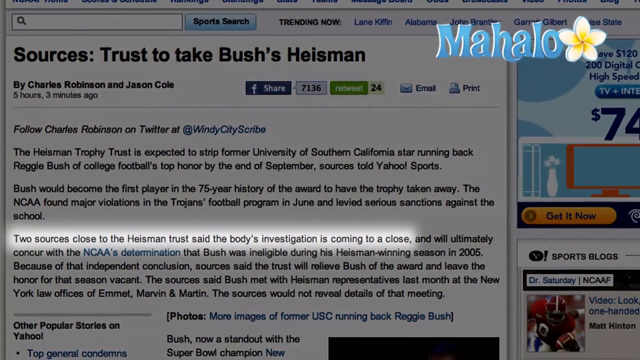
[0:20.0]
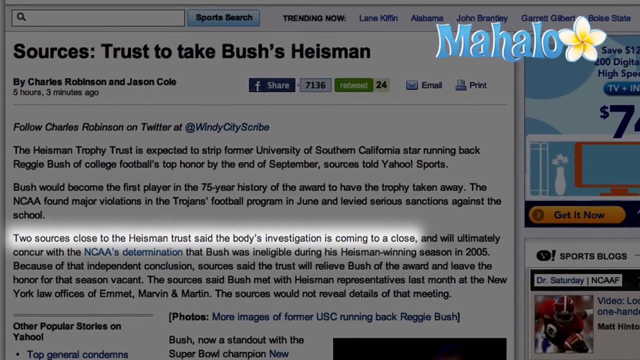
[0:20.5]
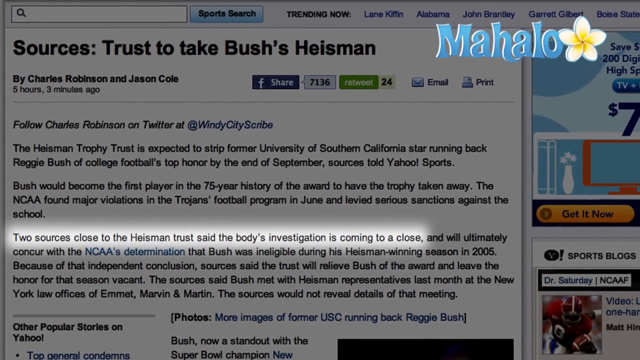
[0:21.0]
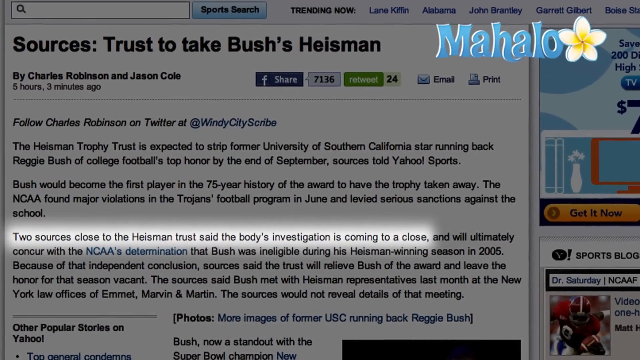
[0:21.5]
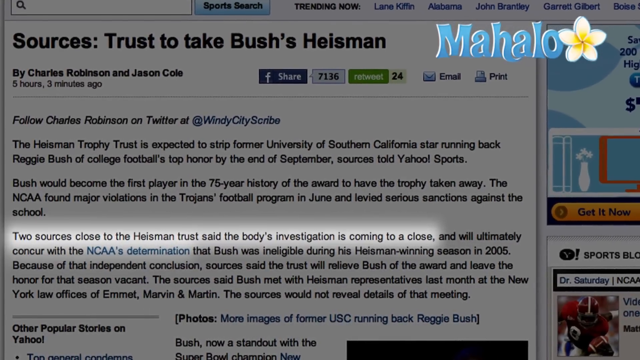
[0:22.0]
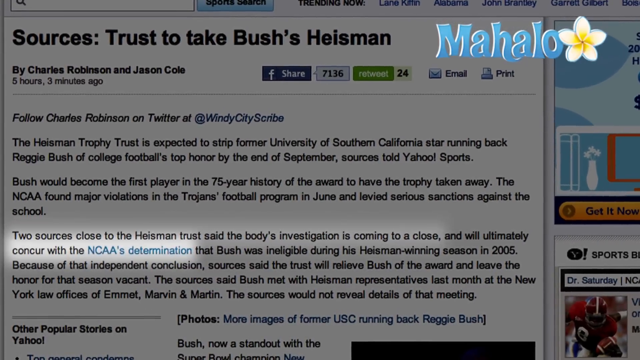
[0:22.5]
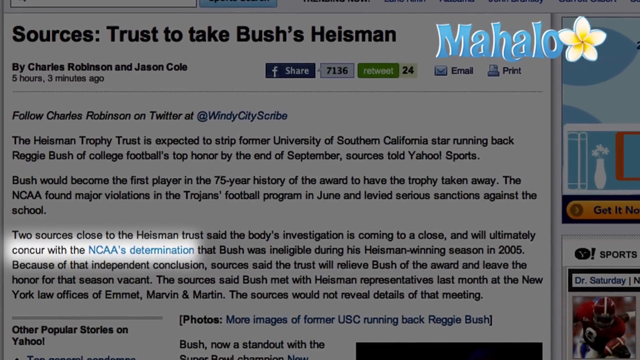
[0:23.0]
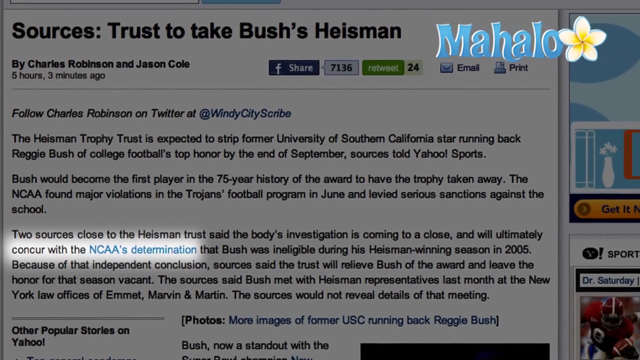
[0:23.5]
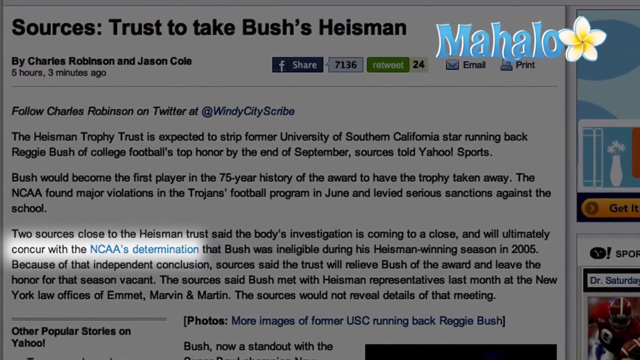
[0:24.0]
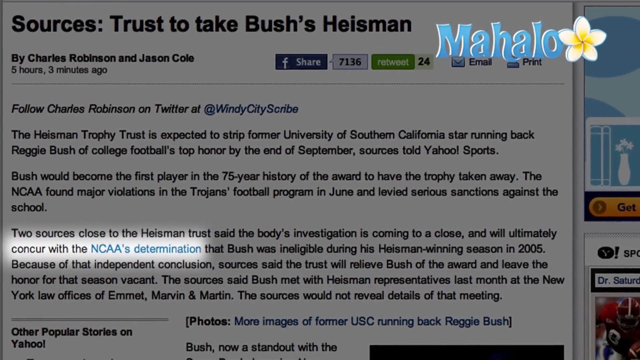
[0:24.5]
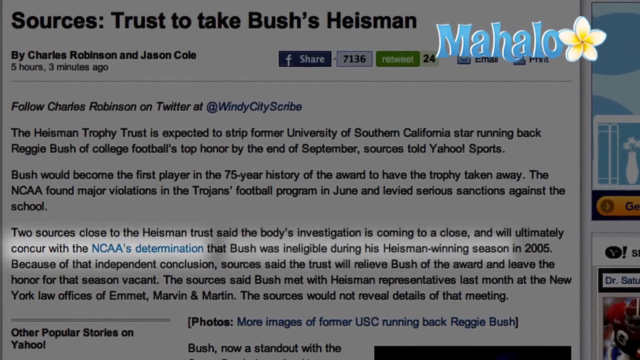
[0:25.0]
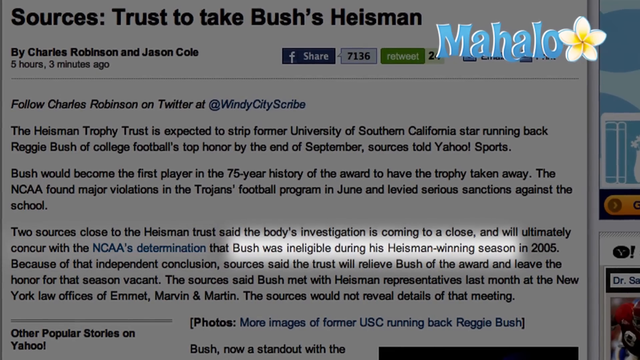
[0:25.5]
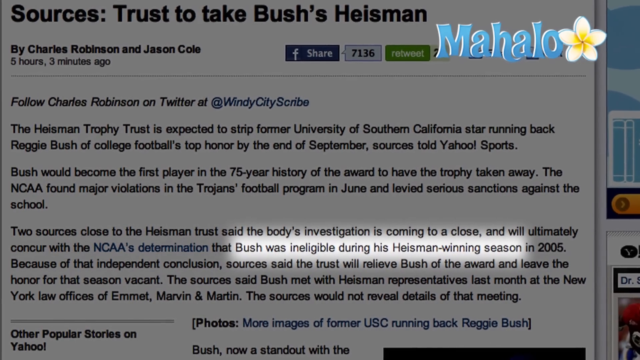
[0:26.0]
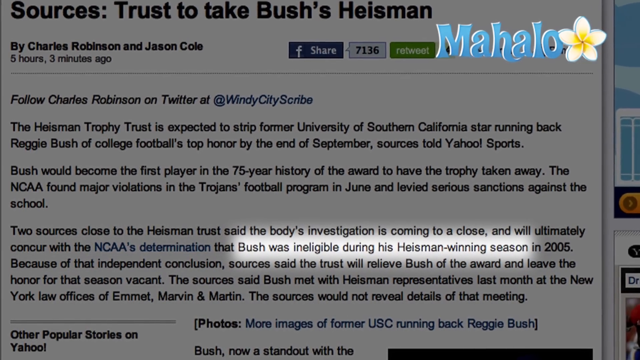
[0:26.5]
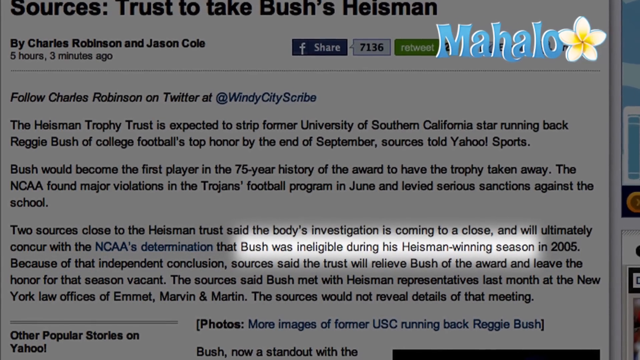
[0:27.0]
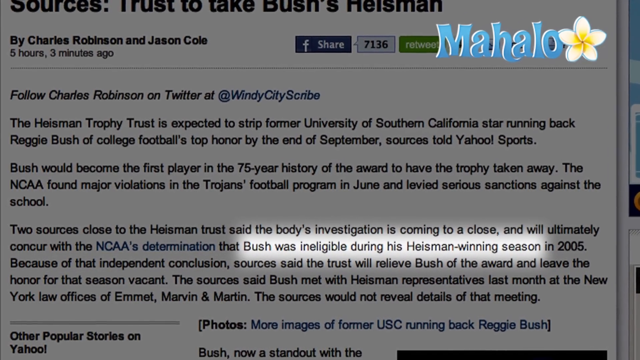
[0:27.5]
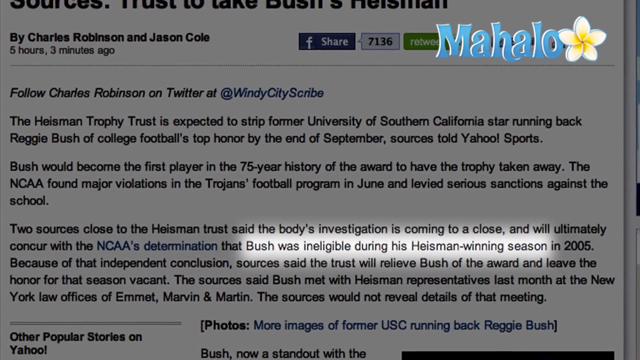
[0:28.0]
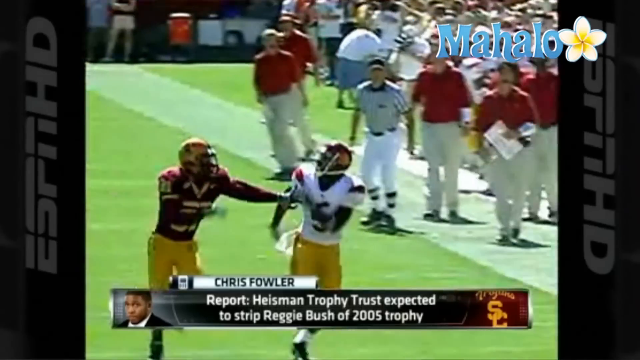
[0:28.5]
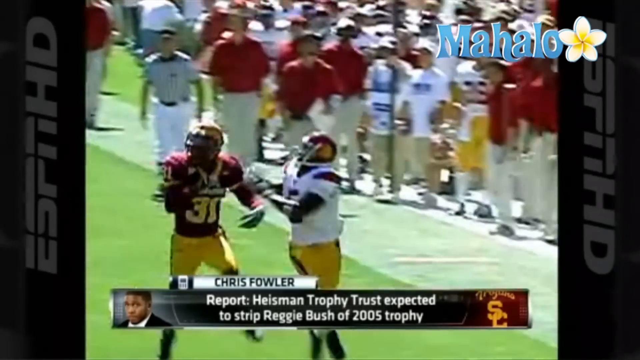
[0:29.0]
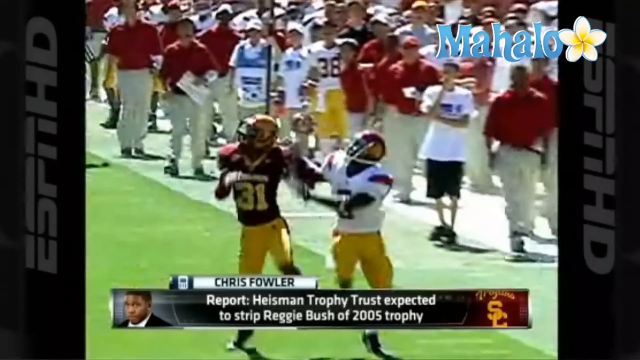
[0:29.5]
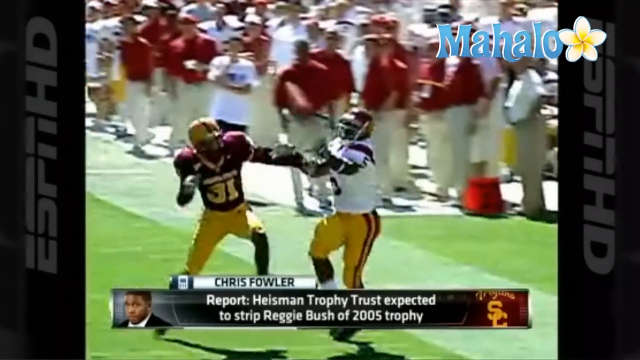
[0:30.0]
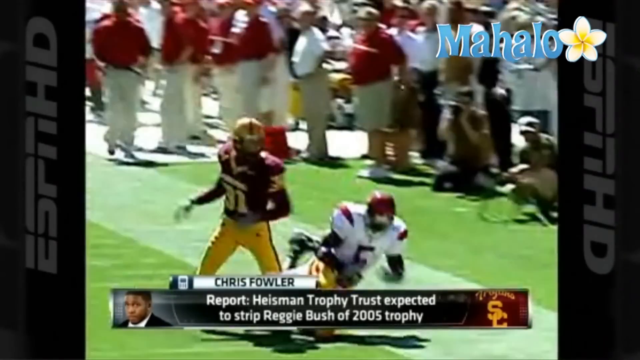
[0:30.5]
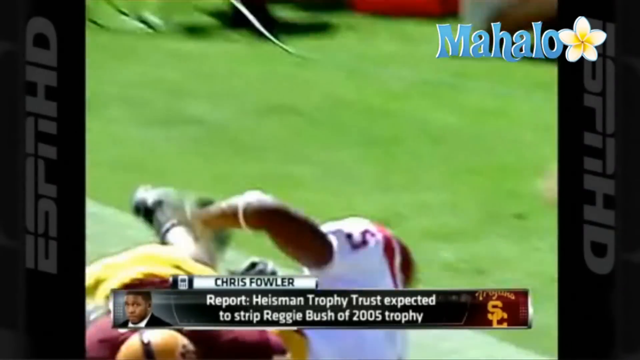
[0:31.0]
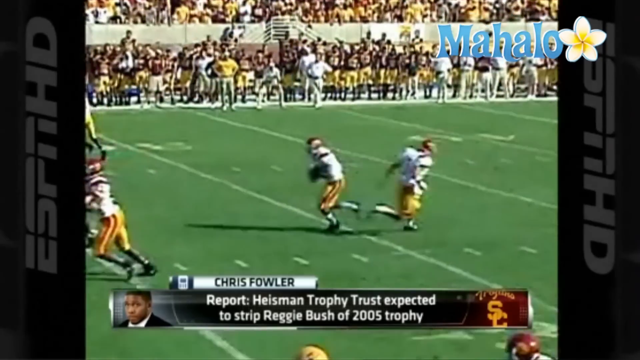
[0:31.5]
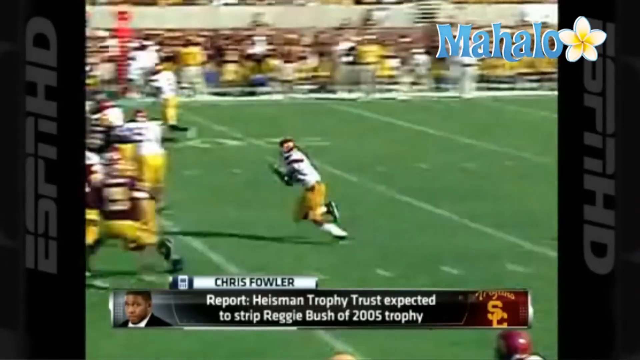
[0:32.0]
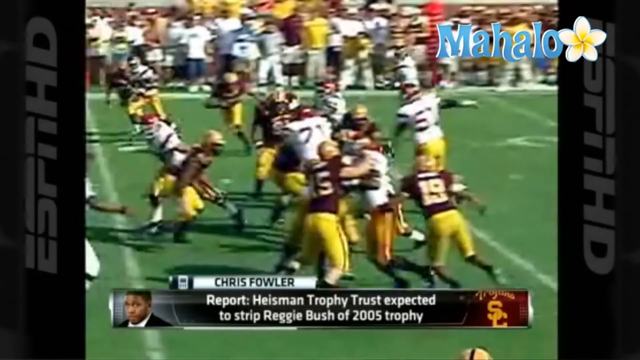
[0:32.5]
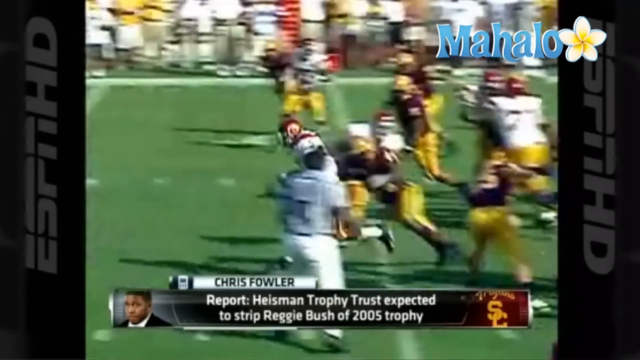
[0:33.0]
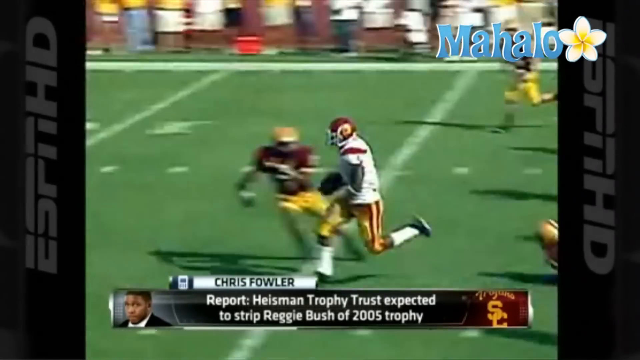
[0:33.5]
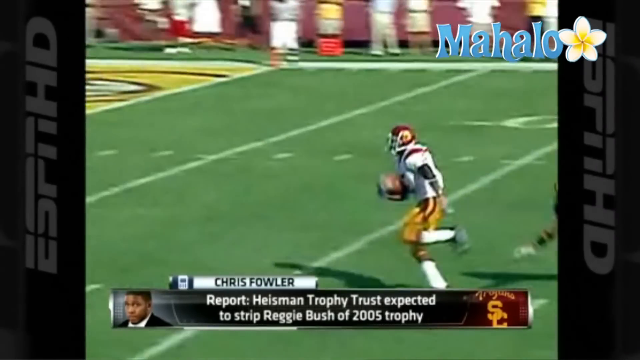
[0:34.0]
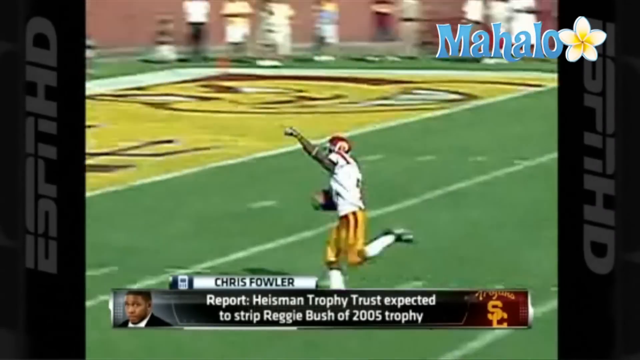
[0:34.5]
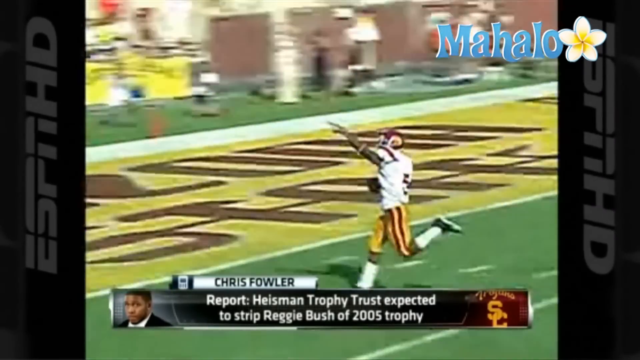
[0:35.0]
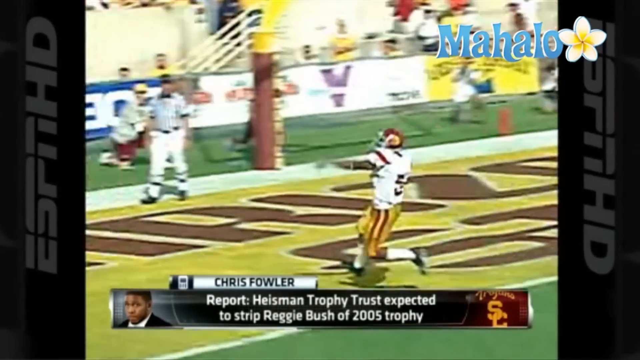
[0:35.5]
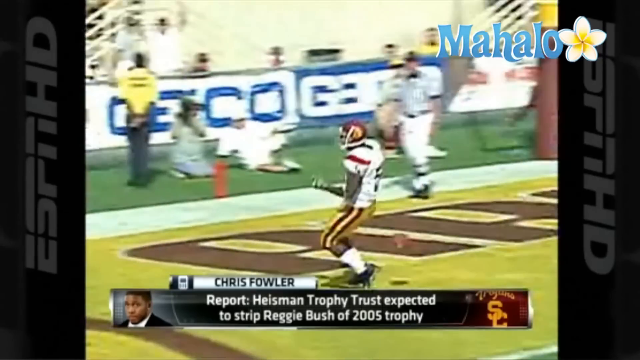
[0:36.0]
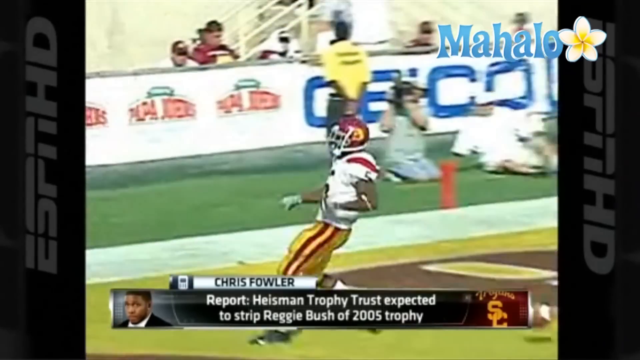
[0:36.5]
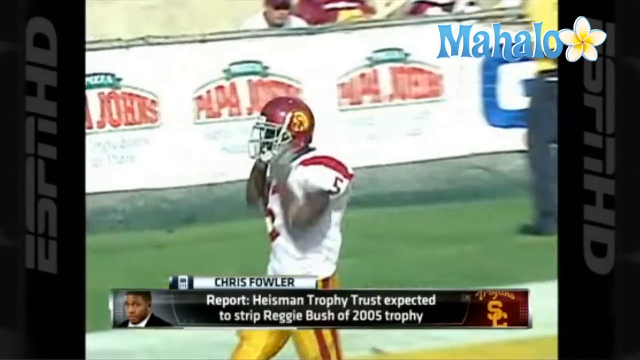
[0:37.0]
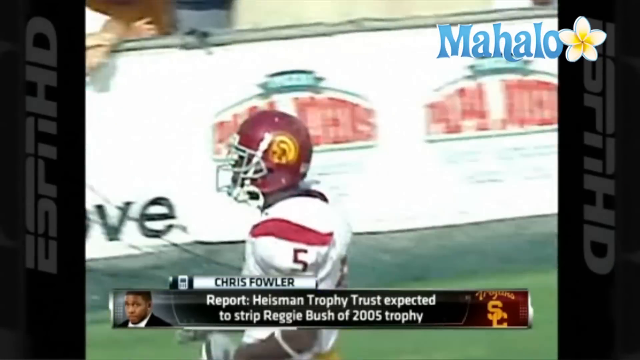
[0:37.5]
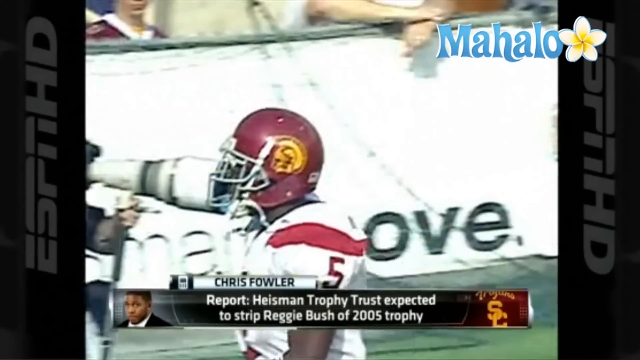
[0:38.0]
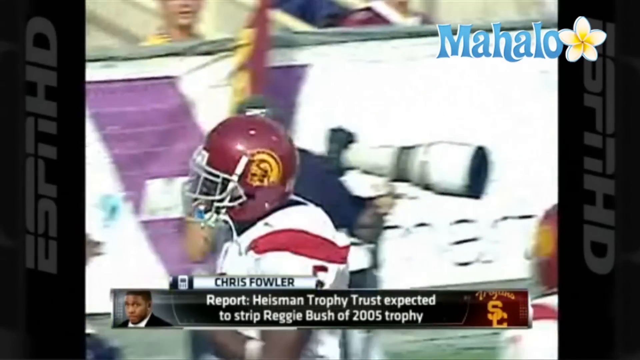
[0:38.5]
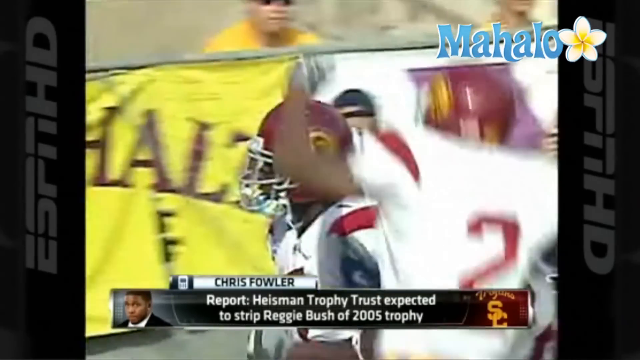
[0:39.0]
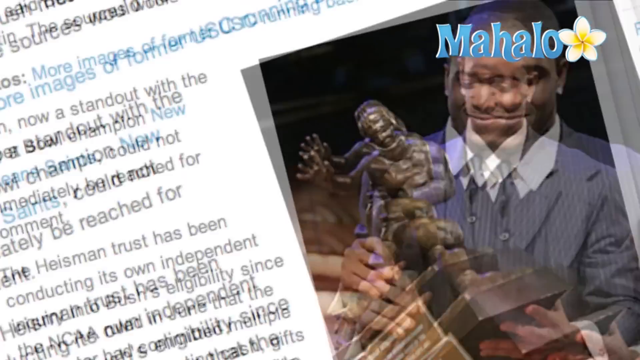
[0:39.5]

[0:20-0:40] The same article remains on screen, and a passage in black text is highlighted in white: "two sources close to the Heisman's trust said the body's investigation is coming to a close." The highlight moves down to the next line, to the phrase "concur with the NCAA's determination," where the words "NCAA's determination" are in blue text. The next highlighted phrase says "Bush was ineligible during his Heisman-winning season." The video then cuts to a highlight of him catching the ball during a USC game, running the ball for a touchdown for USC and celebrating afterwards. It ends on another news article showing Reggie Bush holding the Heisman, which looks like another internet article with a white background and black text. The whole time, the word "Mahalo" is in blue in the upper right corner.